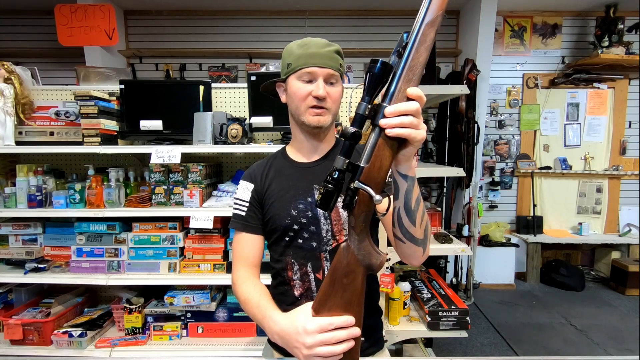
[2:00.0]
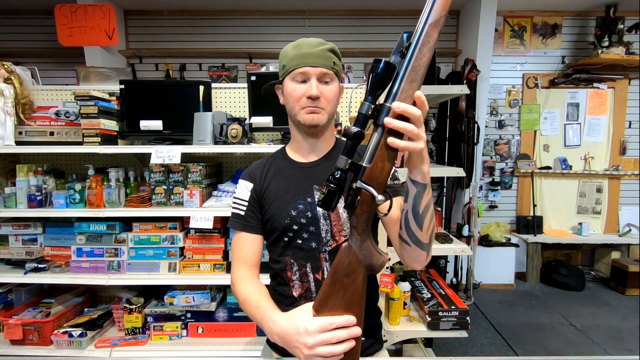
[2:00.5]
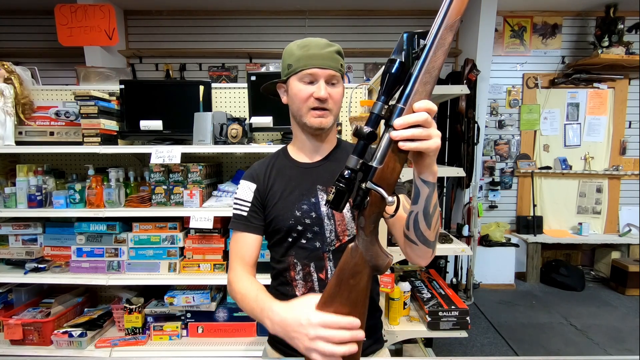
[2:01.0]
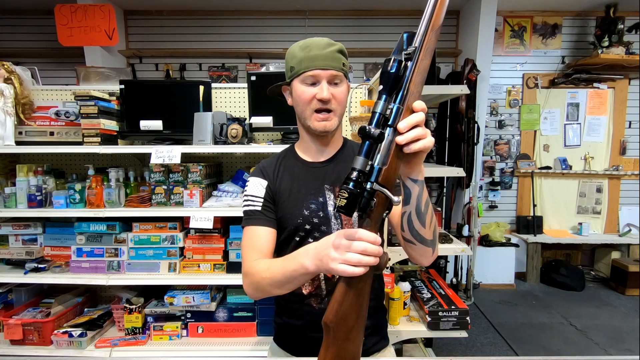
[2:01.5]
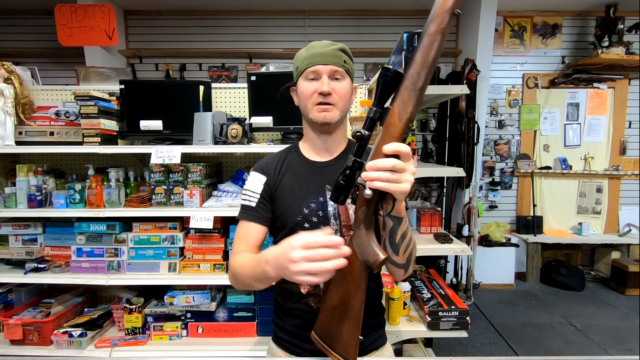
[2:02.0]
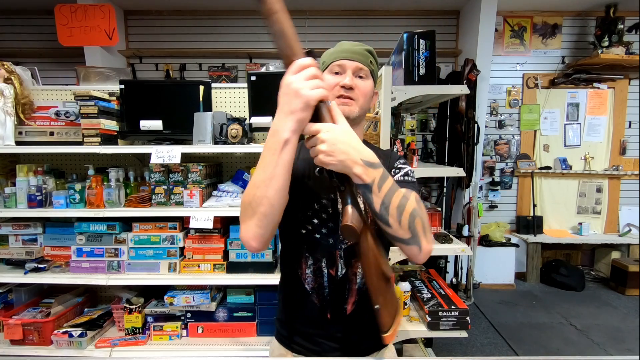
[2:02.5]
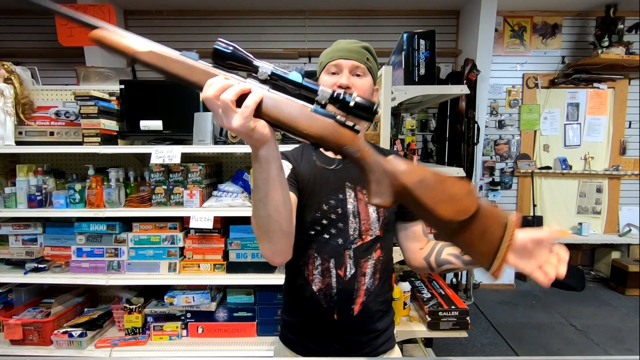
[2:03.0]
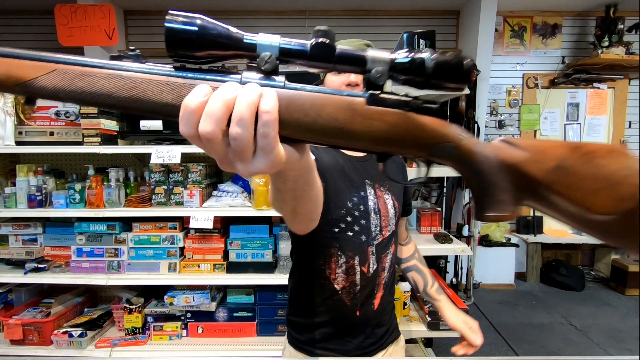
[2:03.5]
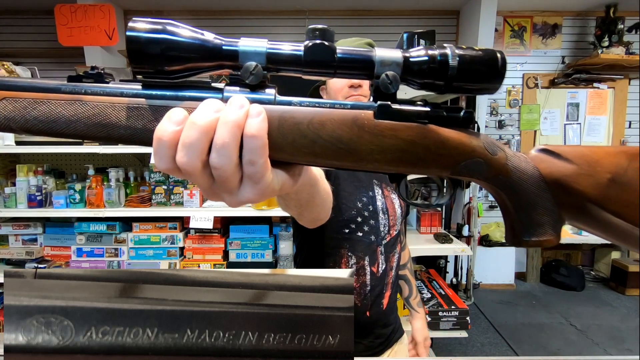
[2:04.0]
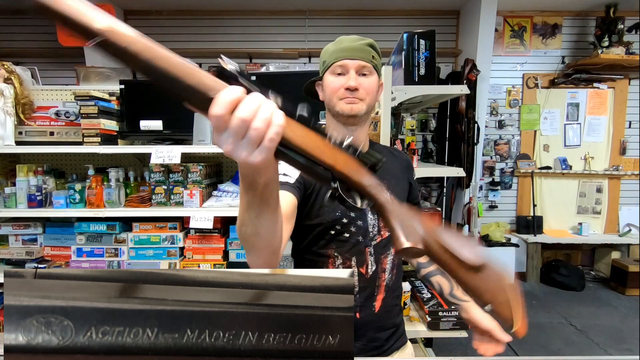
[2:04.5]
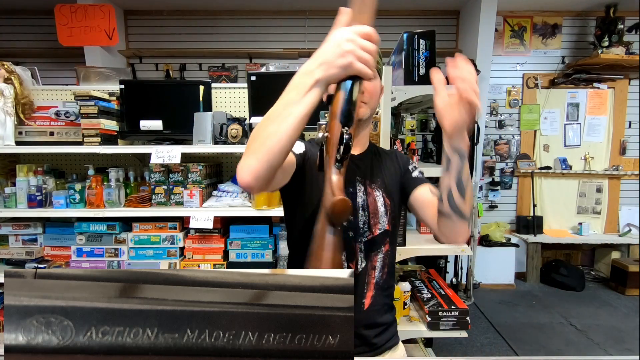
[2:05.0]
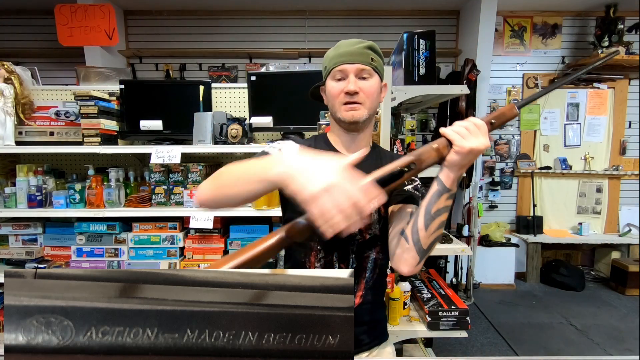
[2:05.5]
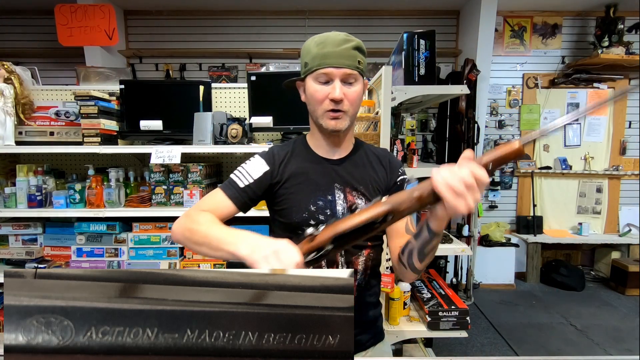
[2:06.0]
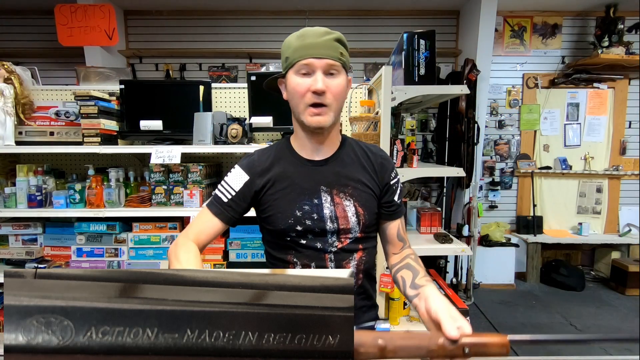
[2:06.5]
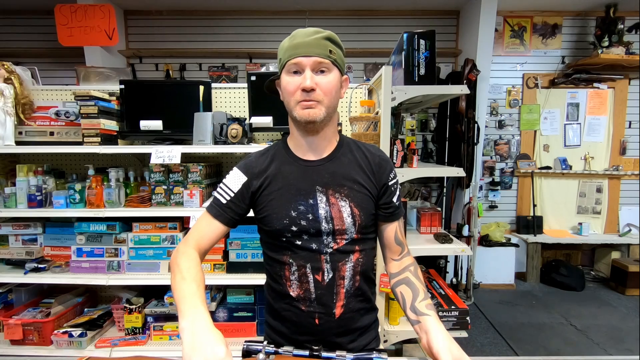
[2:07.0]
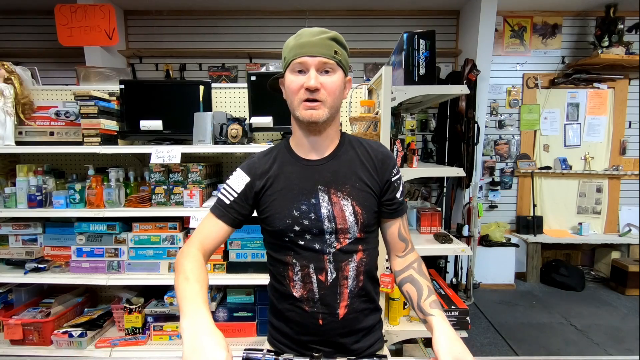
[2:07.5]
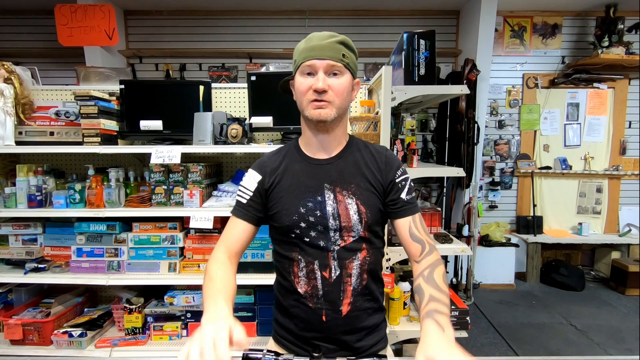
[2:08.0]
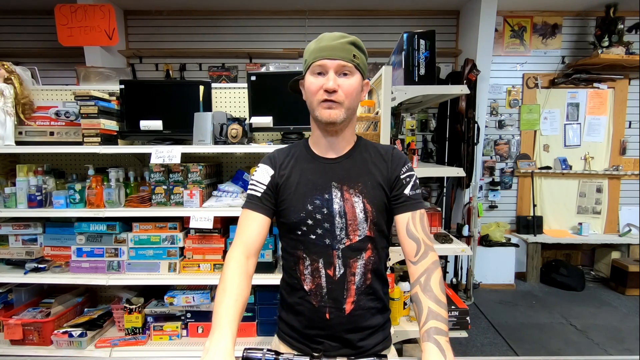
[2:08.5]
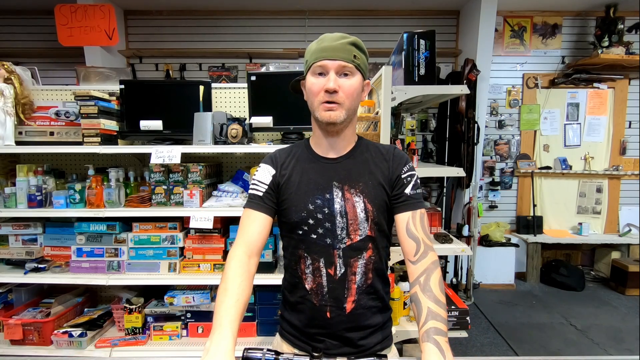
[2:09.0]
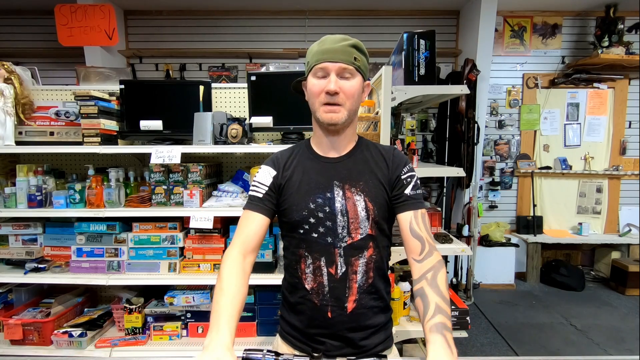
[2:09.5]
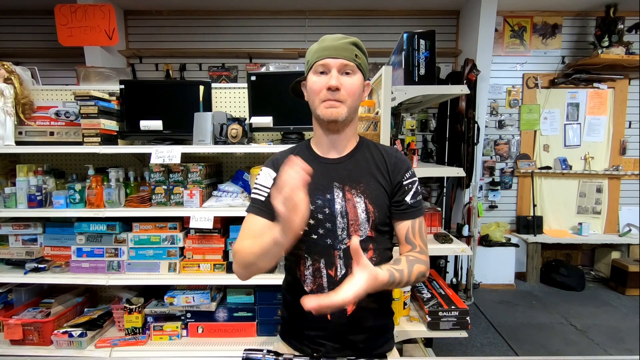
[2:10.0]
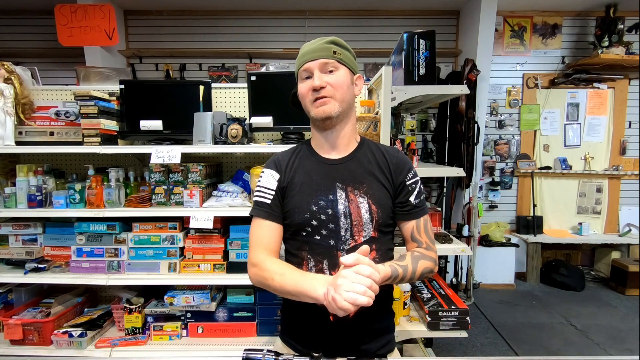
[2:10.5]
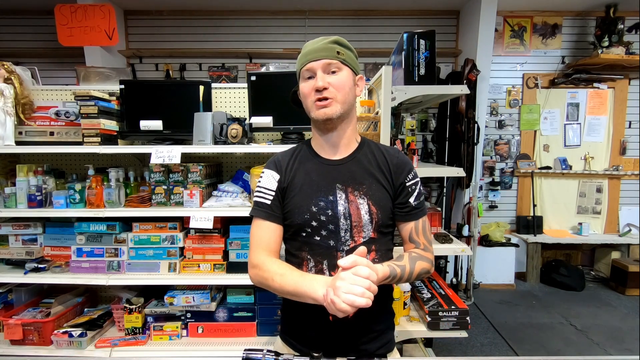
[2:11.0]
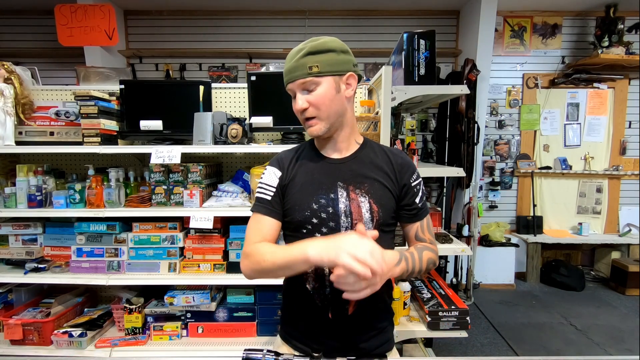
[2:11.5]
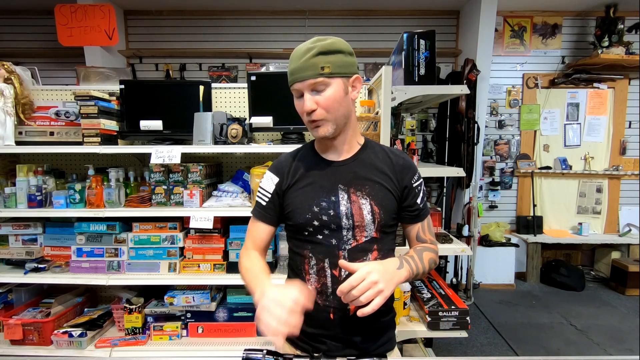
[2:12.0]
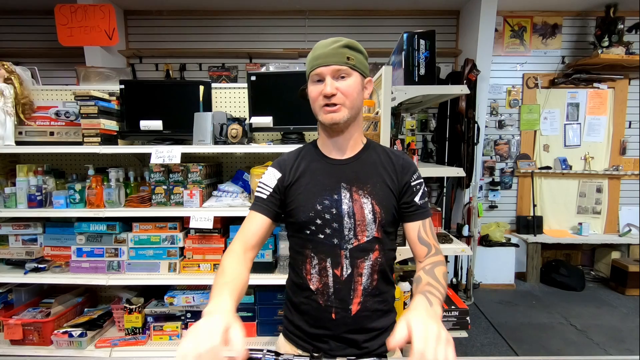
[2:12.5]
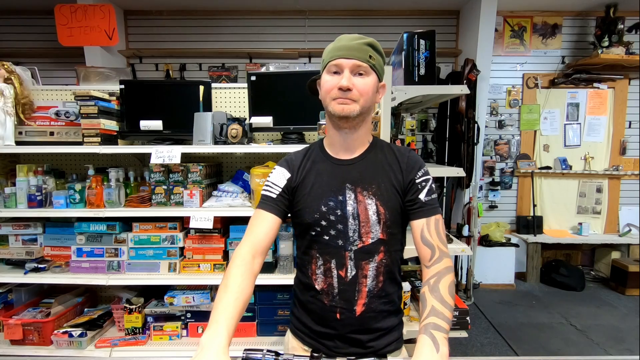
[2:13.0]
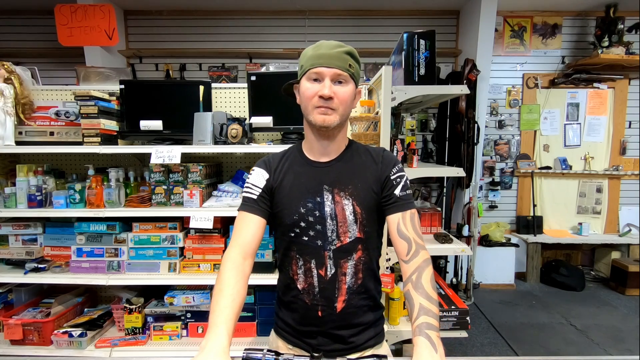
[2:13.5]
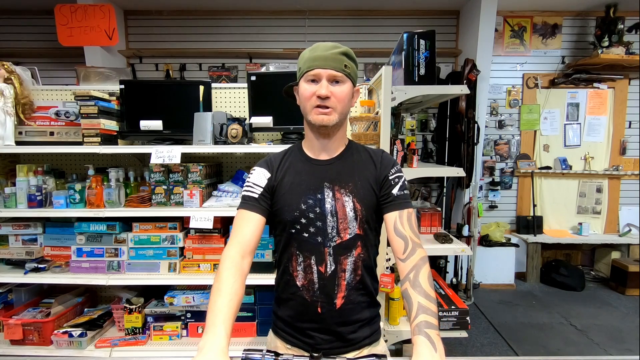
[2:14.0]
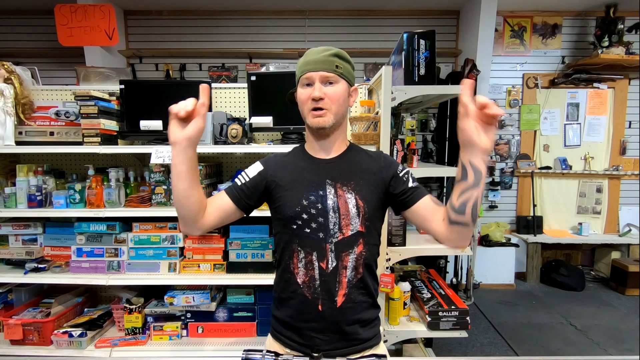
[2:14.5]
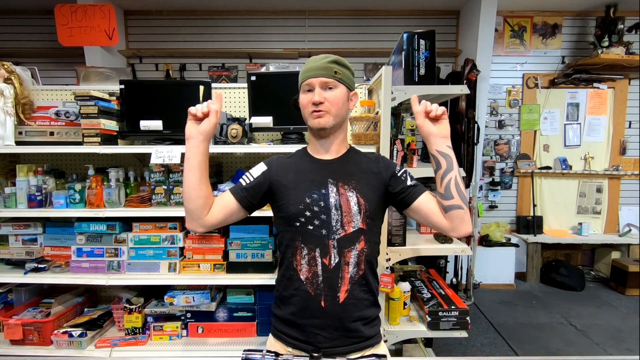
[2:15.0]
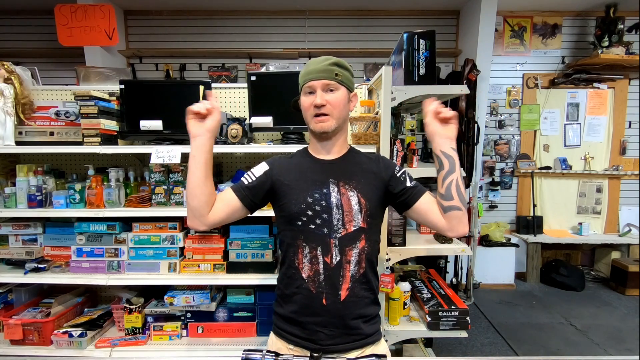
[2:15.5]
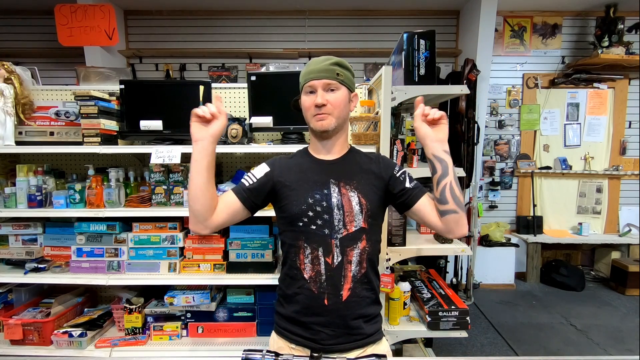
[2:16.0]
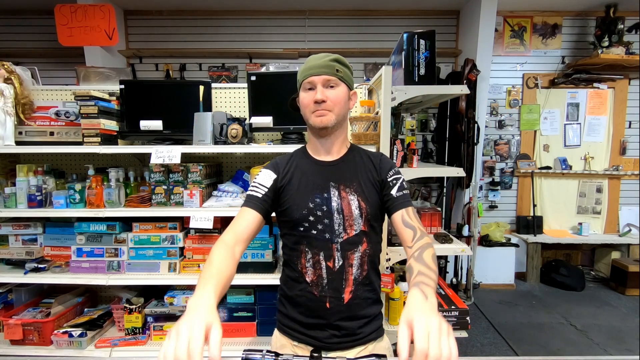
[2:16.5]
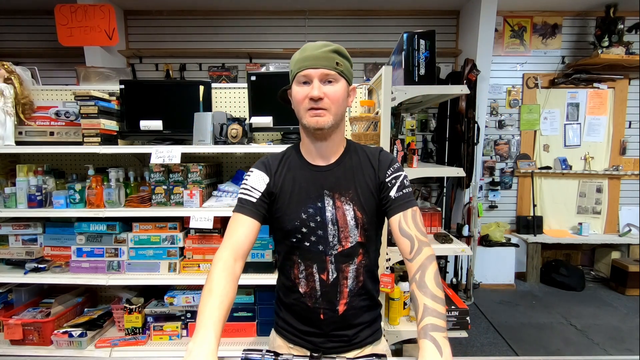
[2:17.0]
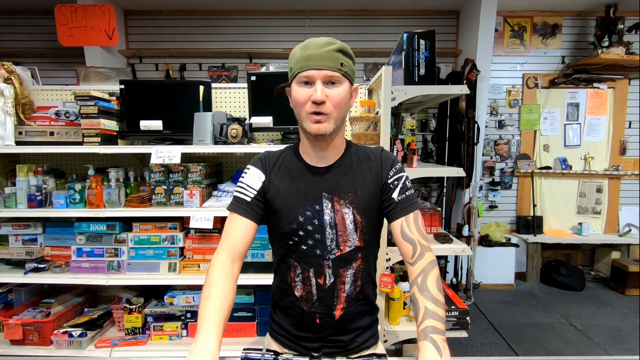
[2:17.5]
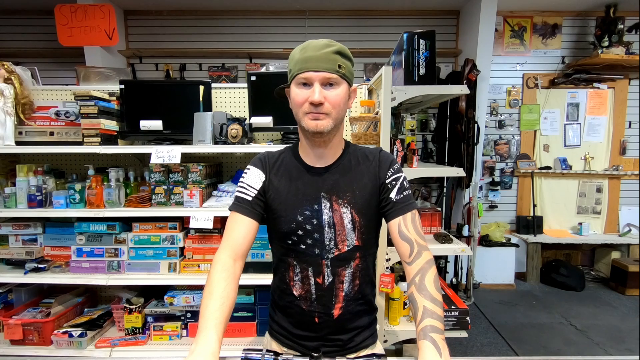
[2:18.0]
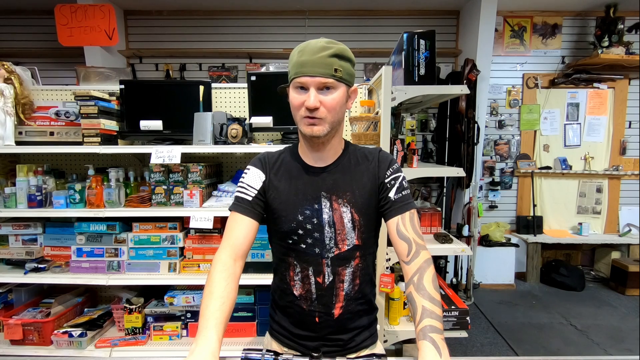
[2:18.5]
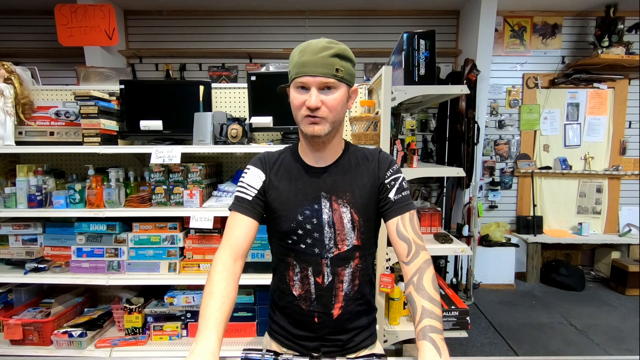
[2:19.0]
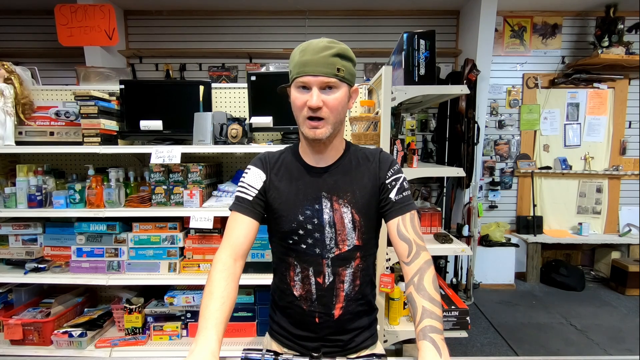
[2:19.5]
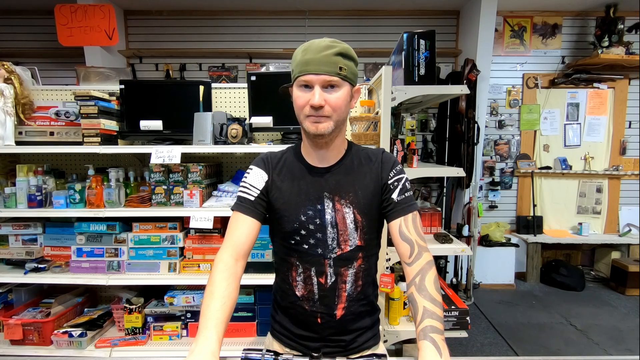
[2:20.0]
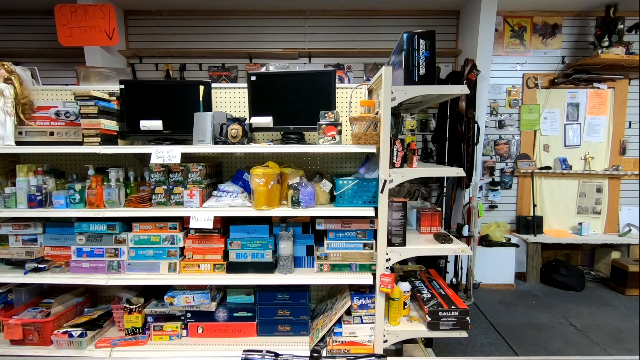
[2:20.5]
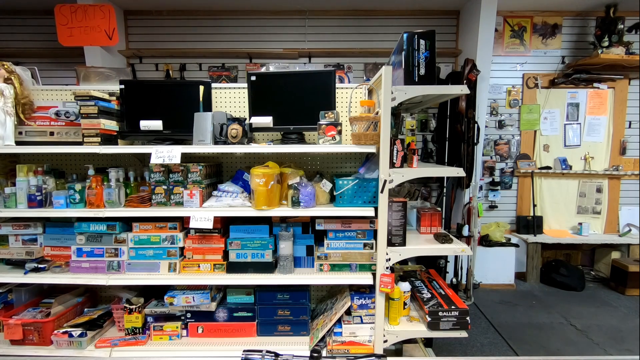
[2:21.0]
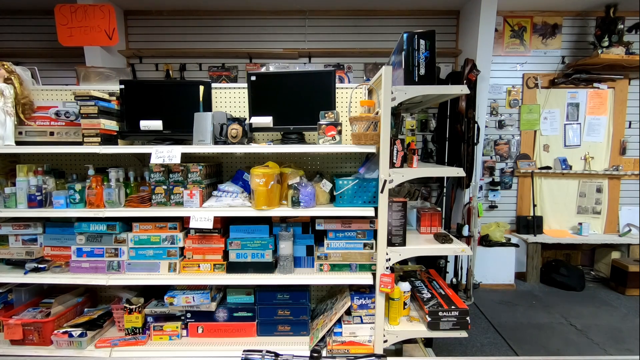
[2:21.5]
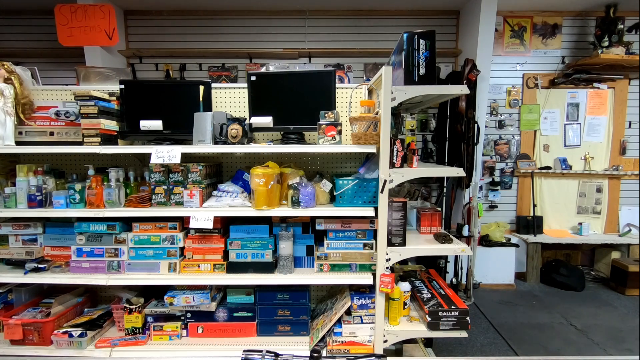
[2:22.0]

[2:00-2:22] A man stands behind the counter of an antique store, holding a rifle in both hands, pointed towards the ceiling. He wears a green baseball cap and a black t-shirt. He looks at the rifle as he speaks and twists it round to show the viewer, turning it 180 degrees to show the other side, before placing it back down onto the counter and returning to address the viewers. Behind him are shelves filled with items: the bottom shelf has jigsaw puzzles neatly stacked in their boxes, the middle shelf has soap and other items, and the top shelf has a cassette player, a stack of cassettes and two small television or computer monitors. The man clasps his hands together as he talks with the viewers. He then disappears from view, leaving a view of the full store area.